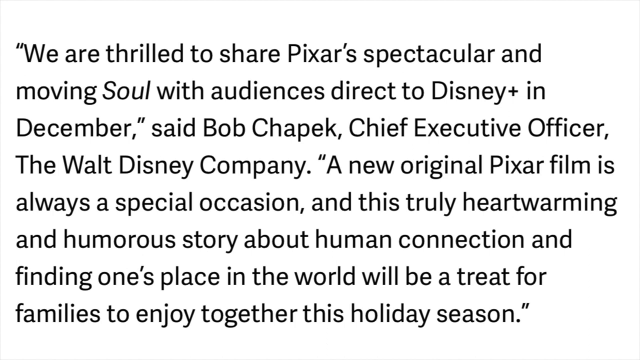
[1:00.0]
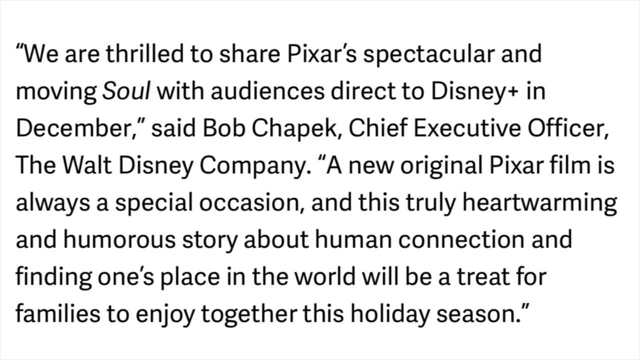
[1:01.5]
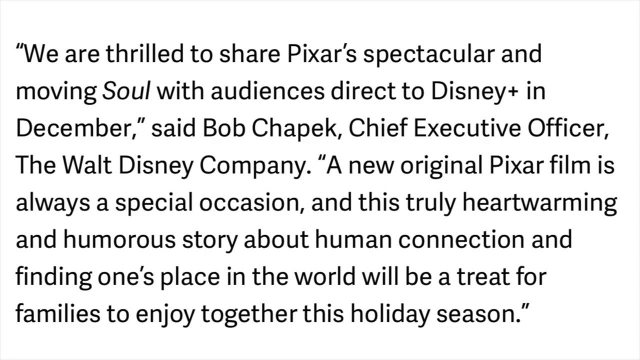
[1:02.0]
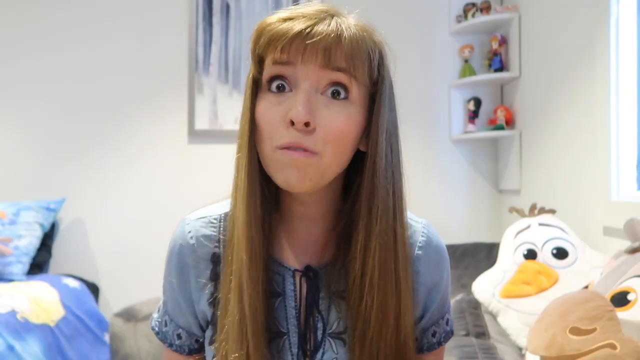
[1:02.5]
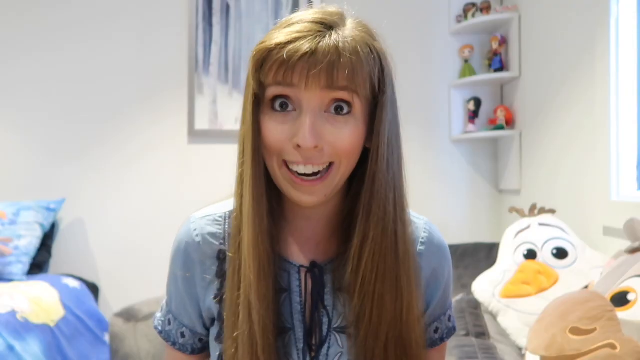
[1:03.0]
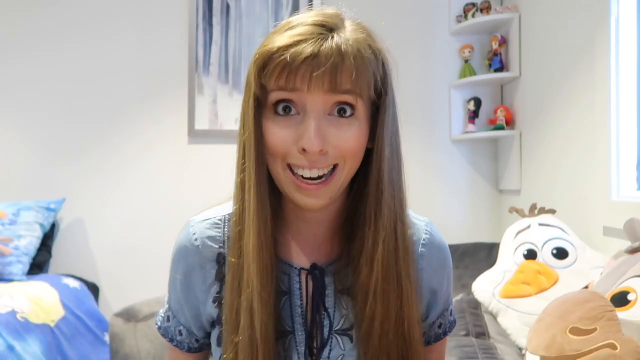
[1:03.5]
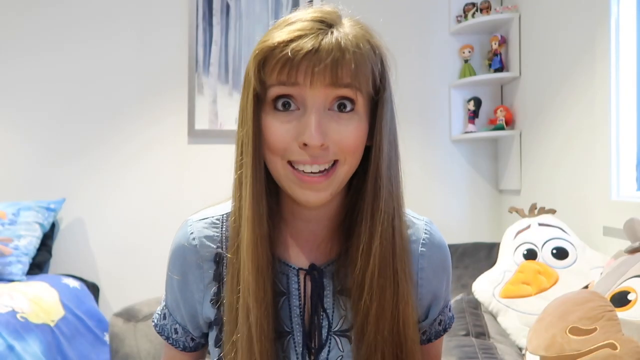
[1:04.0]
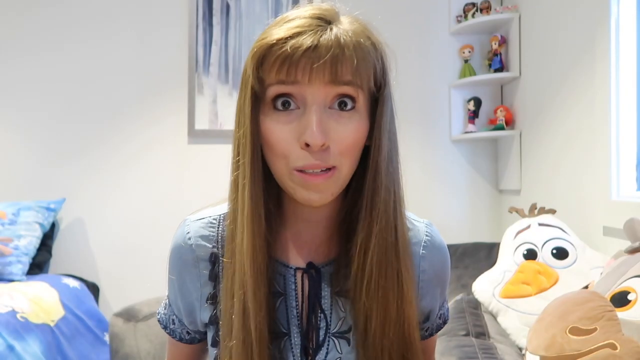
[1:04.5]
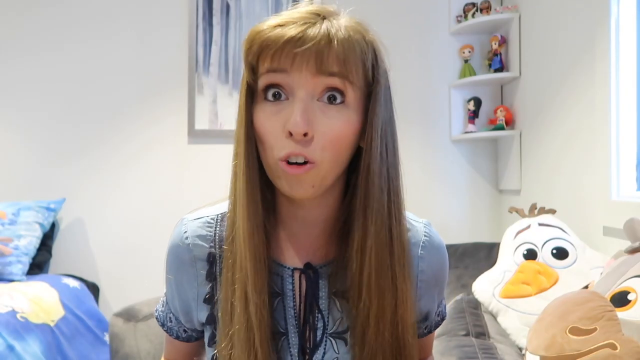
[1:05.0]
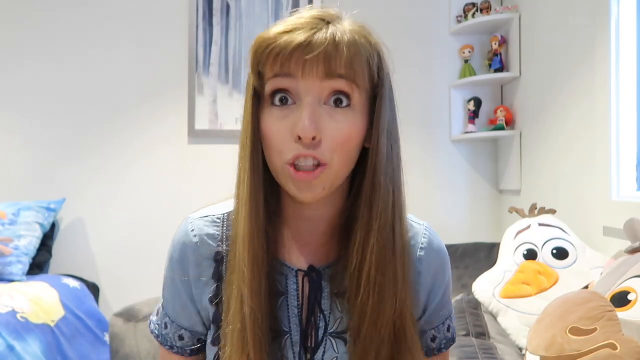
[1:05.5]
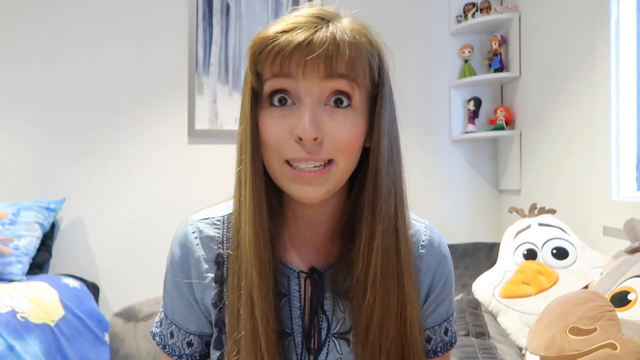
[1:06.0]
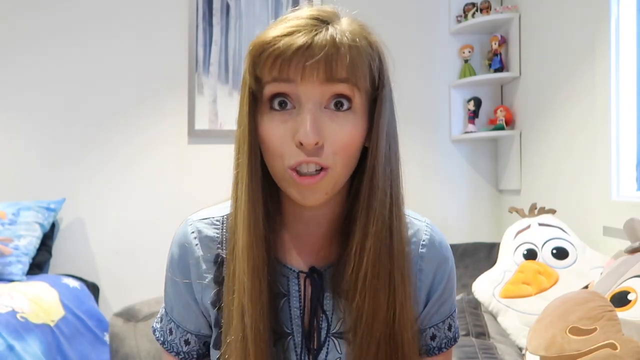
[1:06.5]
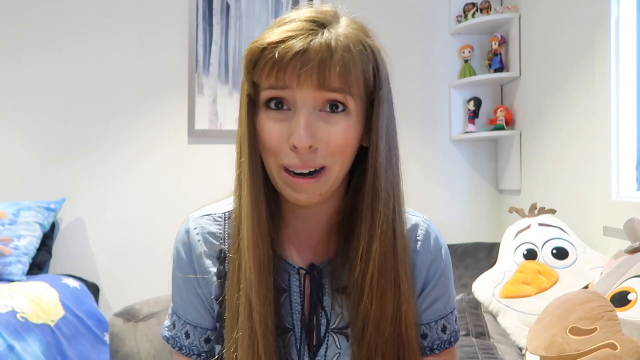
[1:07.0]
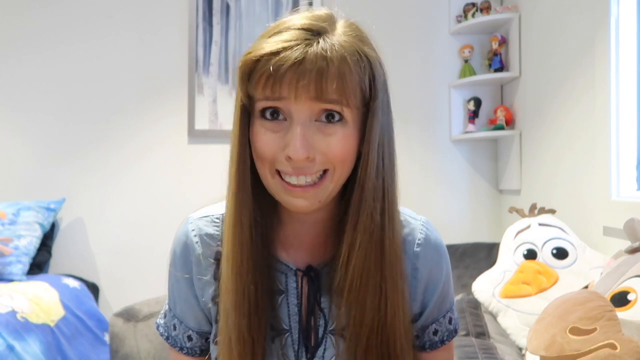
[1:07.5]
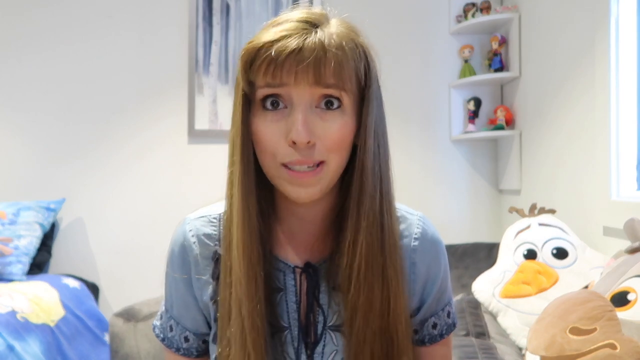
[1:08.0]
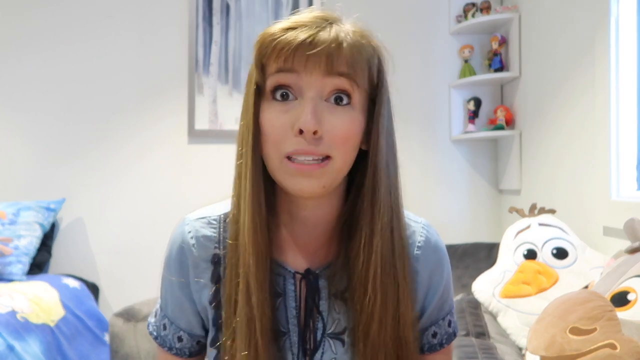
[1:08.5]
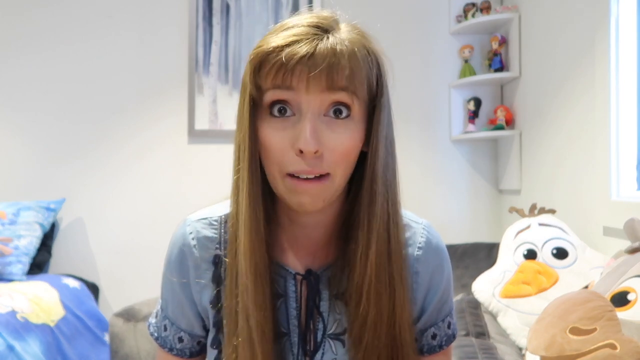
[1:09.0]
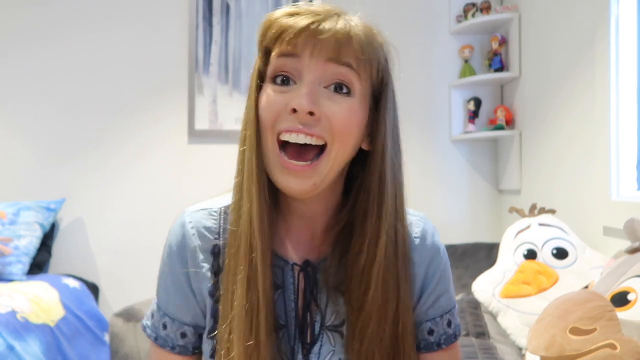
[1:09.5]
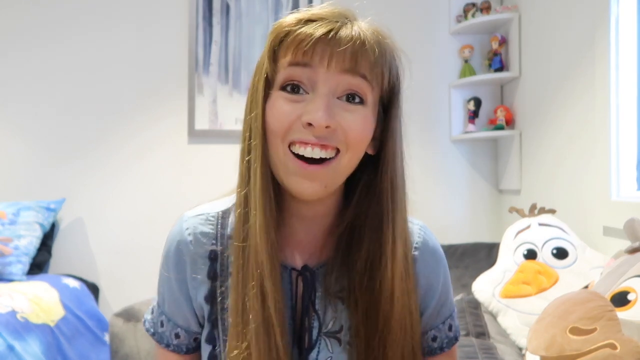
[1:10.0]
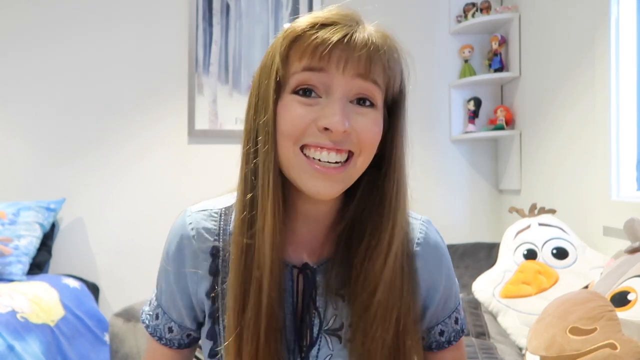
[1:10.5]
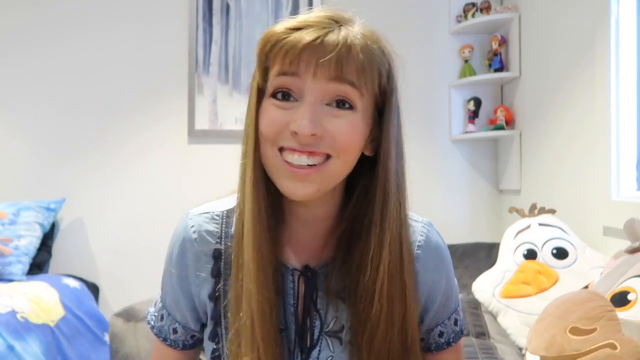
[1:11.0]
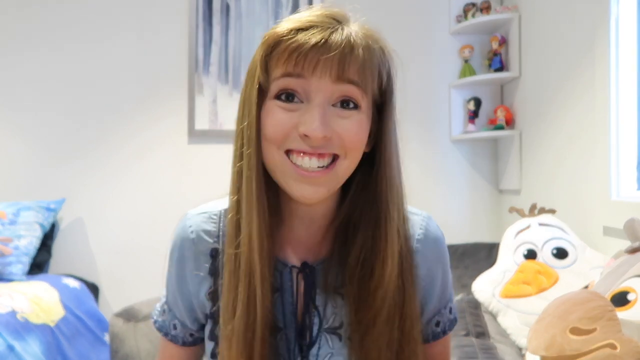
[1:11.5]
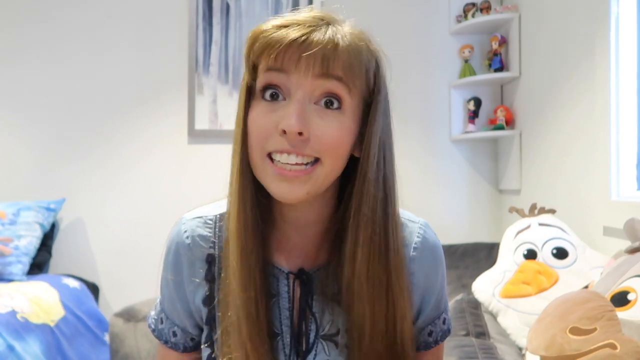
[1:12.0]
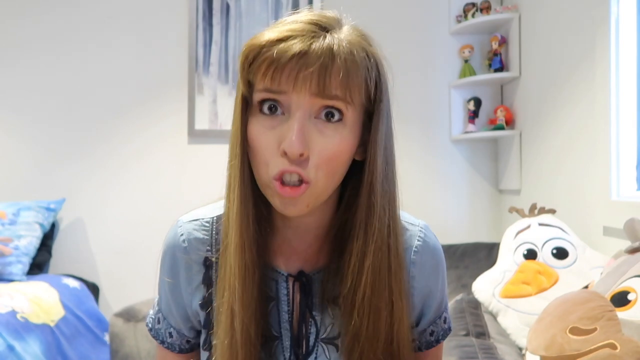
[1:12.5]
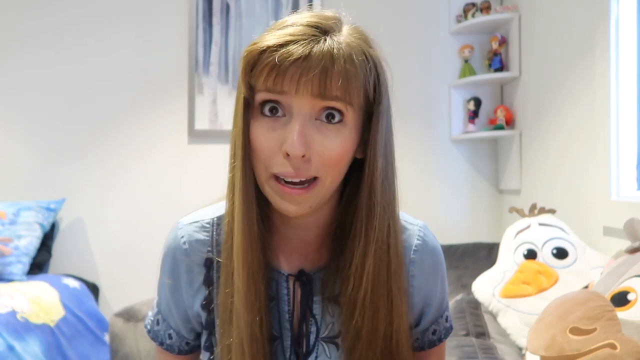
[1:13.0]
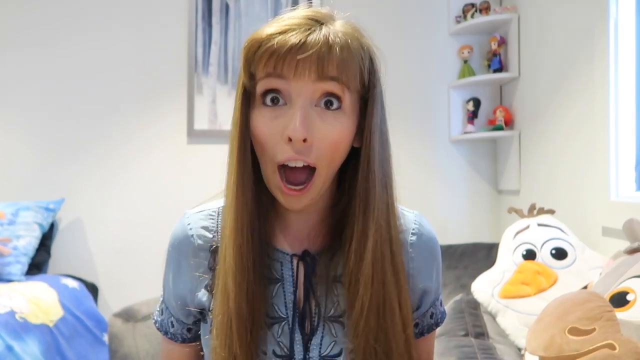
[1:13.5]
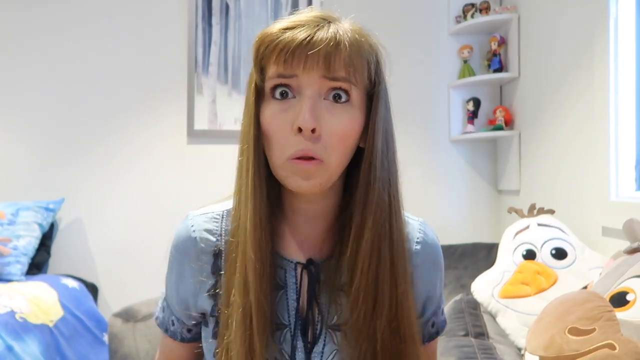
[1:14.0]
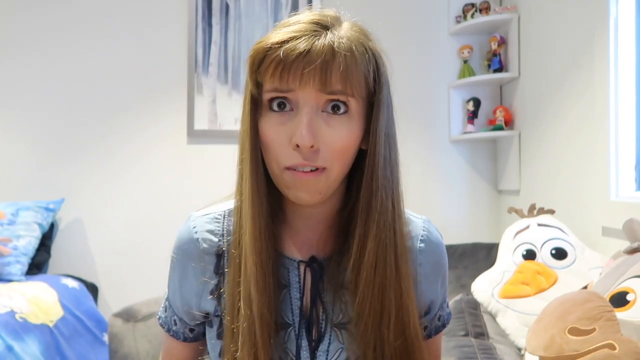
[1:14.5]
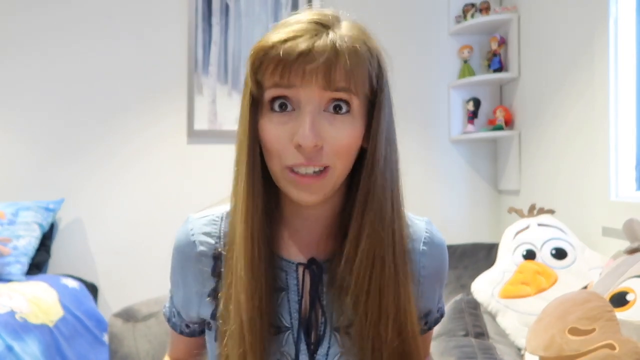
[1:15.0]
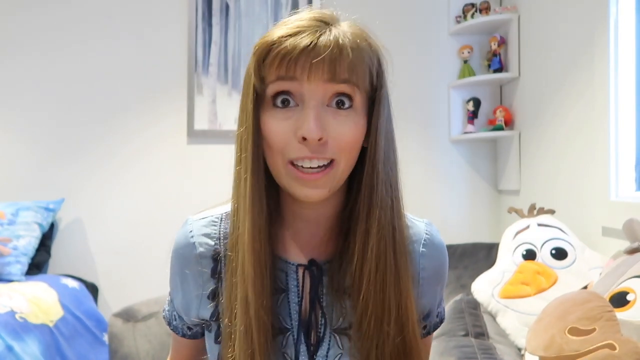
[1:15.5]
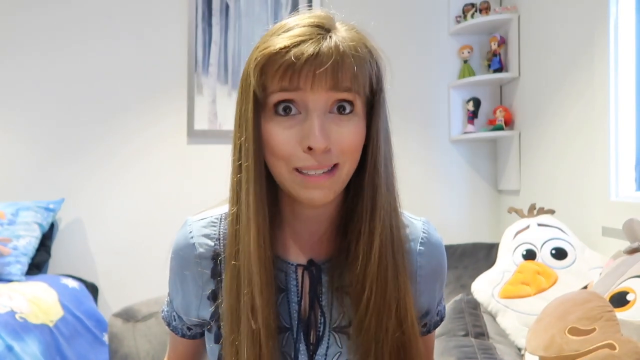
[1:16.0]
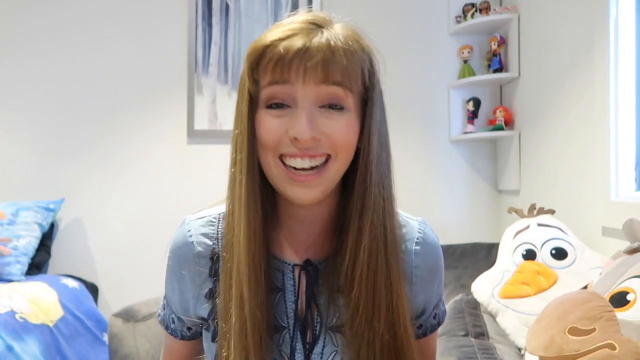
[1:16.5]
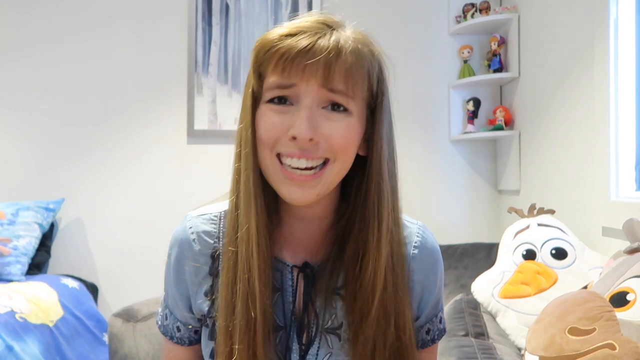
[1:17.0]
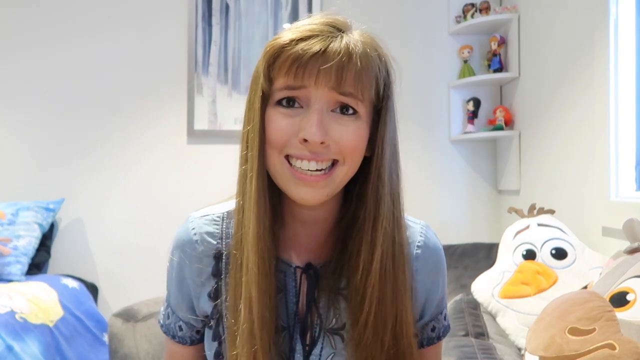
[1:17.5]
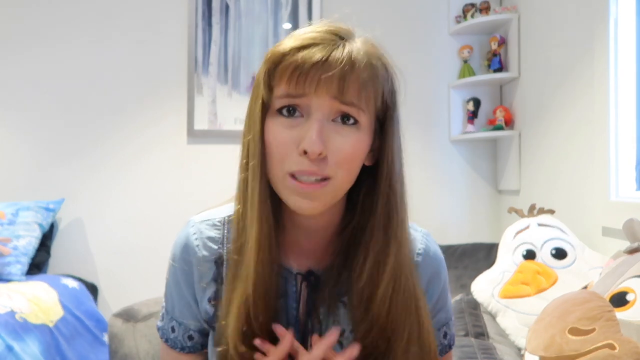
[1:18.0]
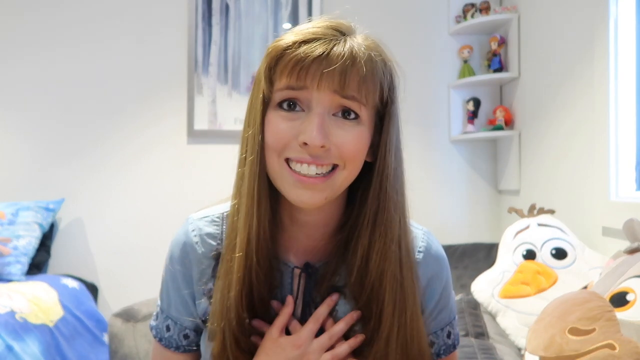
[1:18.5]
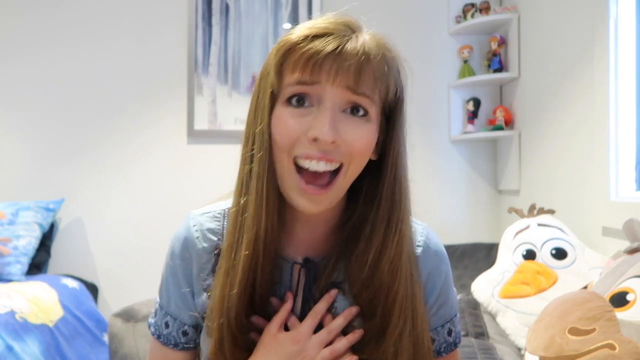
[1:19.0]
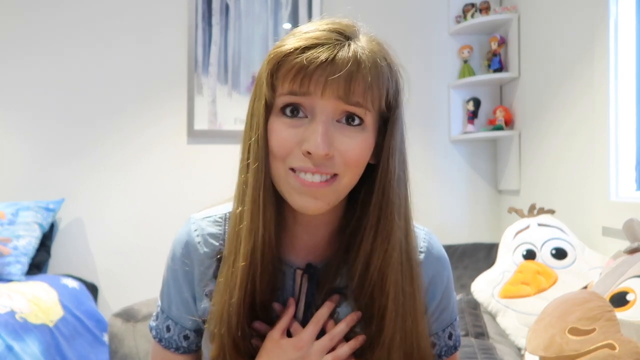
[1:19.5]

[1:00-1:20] On-screen text reads: "we are thrilled to share Pixar's spectacular and moving Soul with audiences" ... said Bob Chepak, chief executive officer, the Walt Disney Company. "A new original Pixar film is always a special occasion and this truly heartwarming and humorous story about human connection and finding one's place in the world will be a treat for families to enjoy together this holiday season." The white woman with long, straight blonde hair then speaks very enthusiastically directly at the camera, opening her eyes very wide and showing her teeth. Her bedroom is white, and a shelf with small figurines is on the right side of the screen. She makes a large variety of facial expressions and smiles a lot as she speaks.